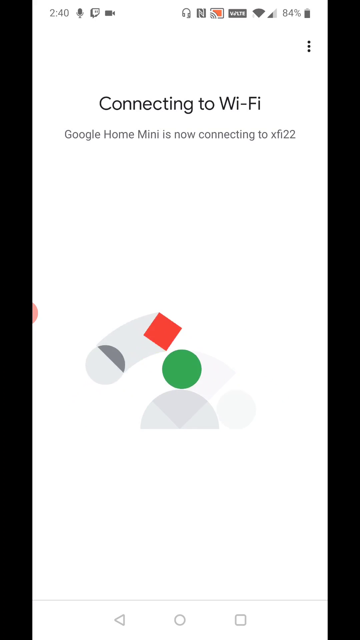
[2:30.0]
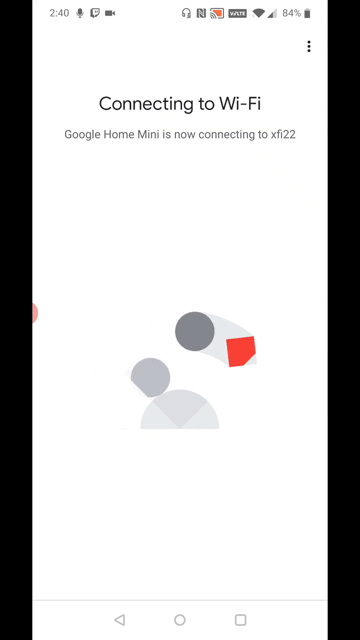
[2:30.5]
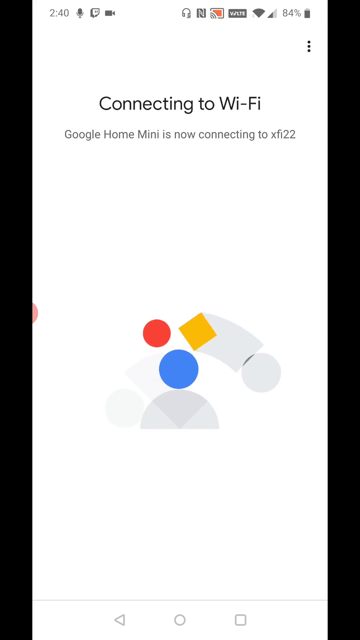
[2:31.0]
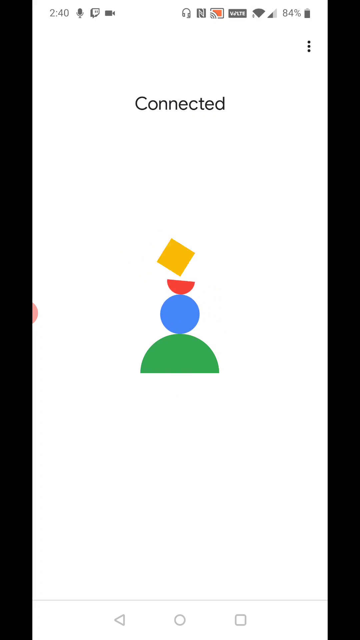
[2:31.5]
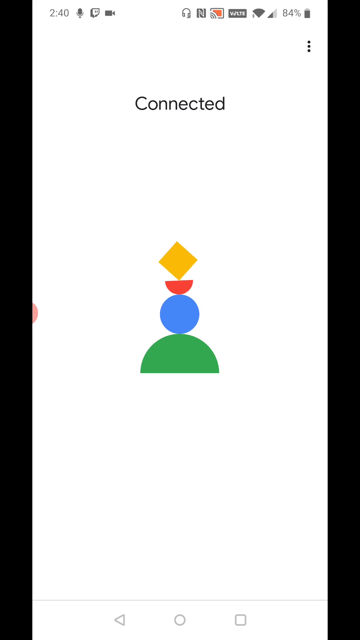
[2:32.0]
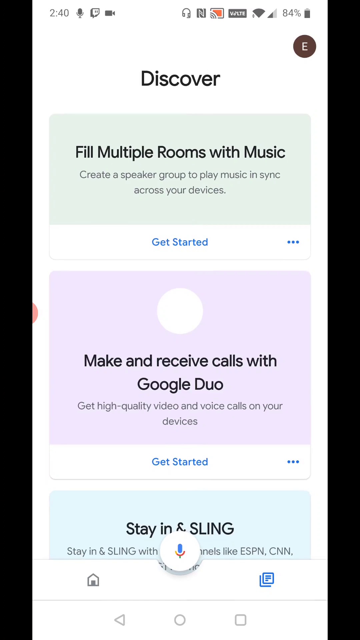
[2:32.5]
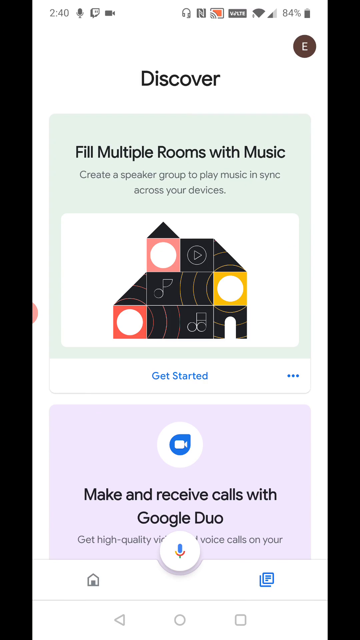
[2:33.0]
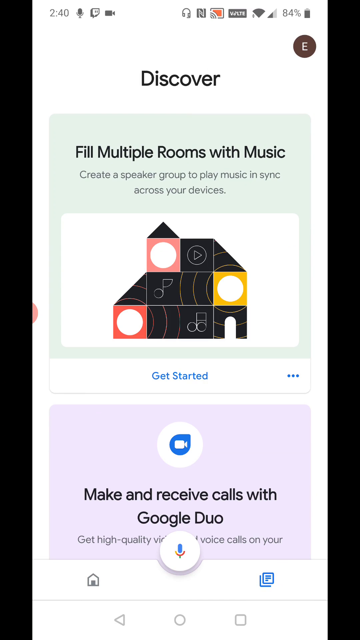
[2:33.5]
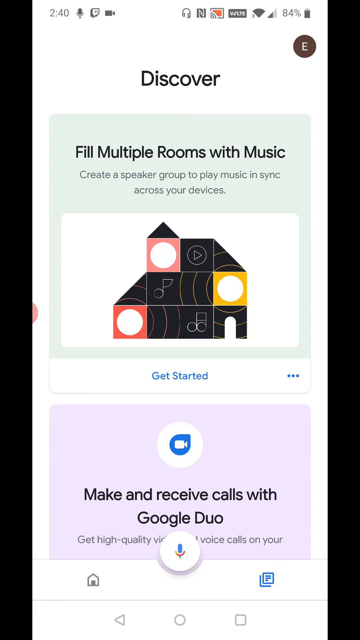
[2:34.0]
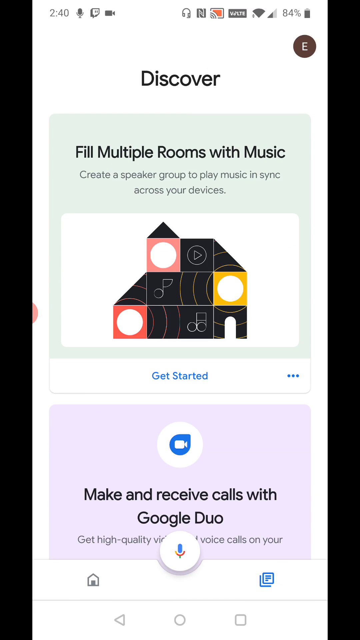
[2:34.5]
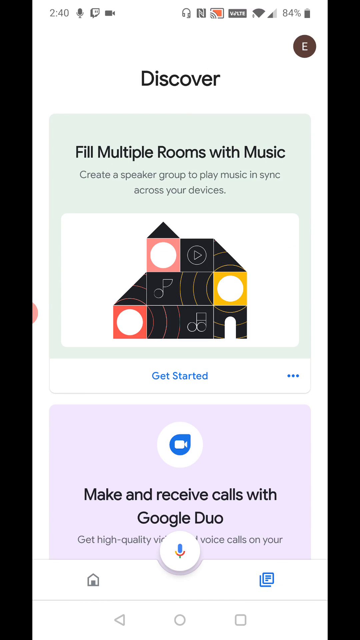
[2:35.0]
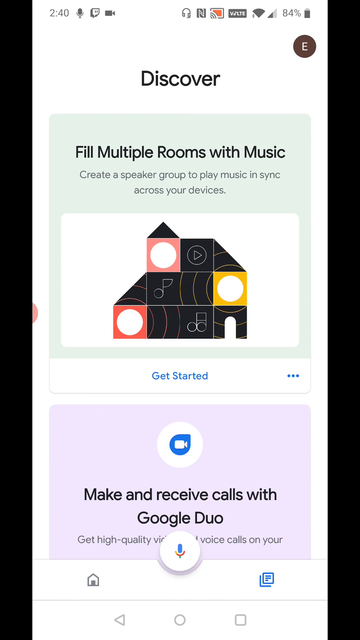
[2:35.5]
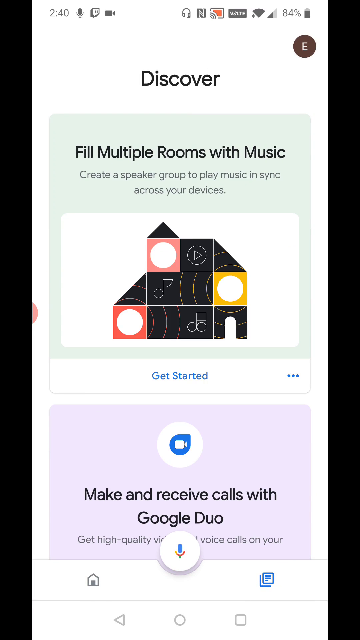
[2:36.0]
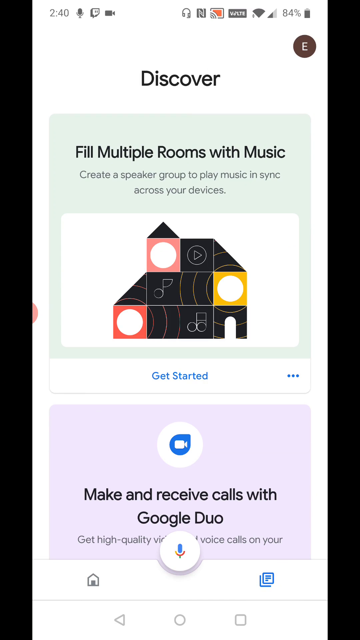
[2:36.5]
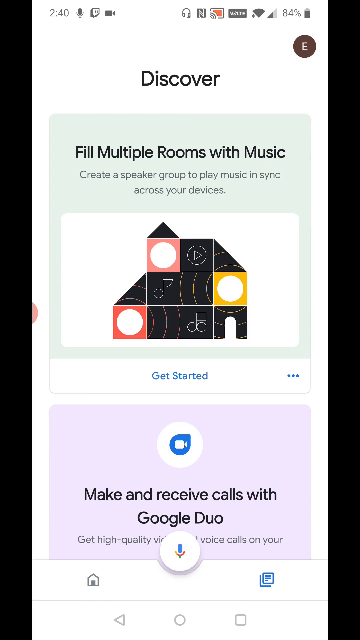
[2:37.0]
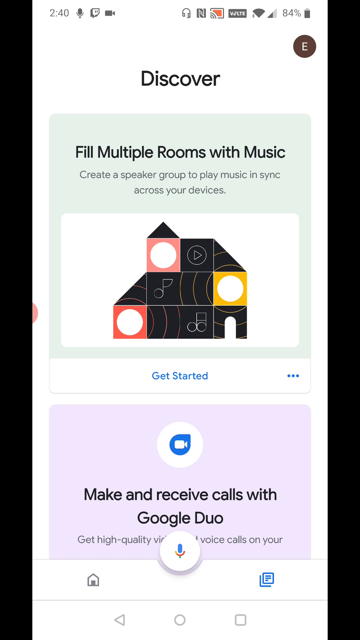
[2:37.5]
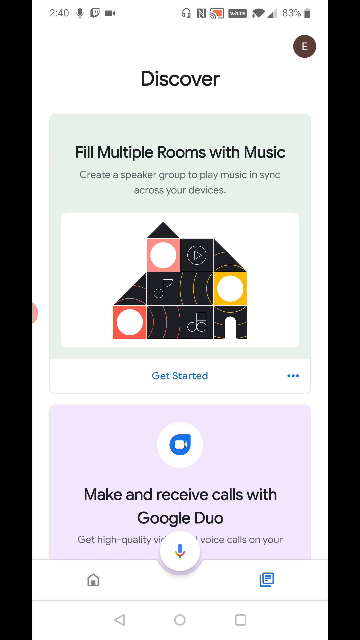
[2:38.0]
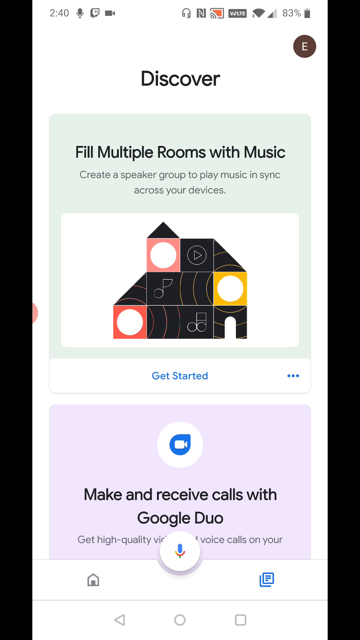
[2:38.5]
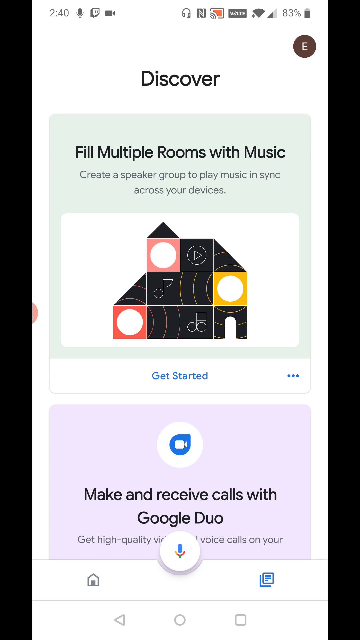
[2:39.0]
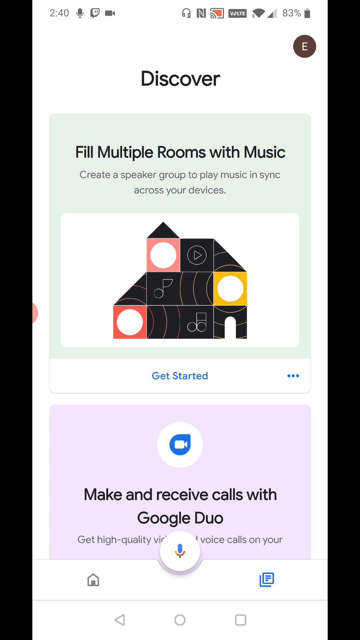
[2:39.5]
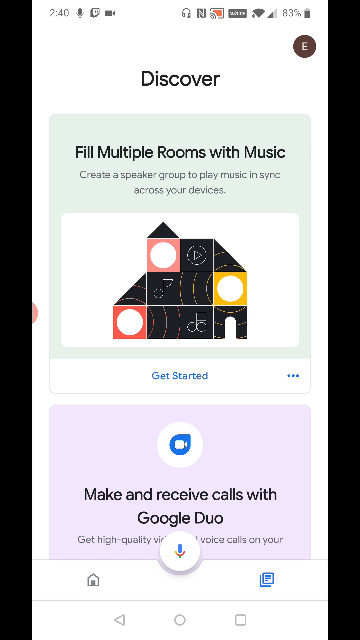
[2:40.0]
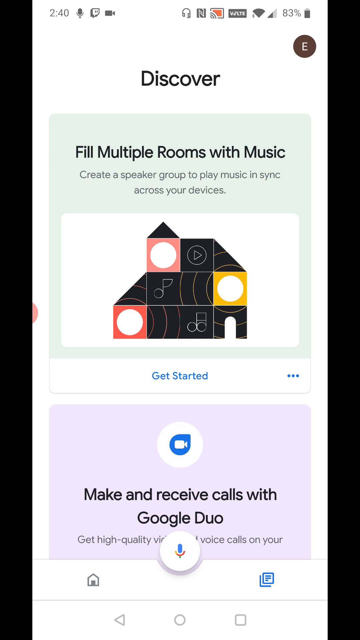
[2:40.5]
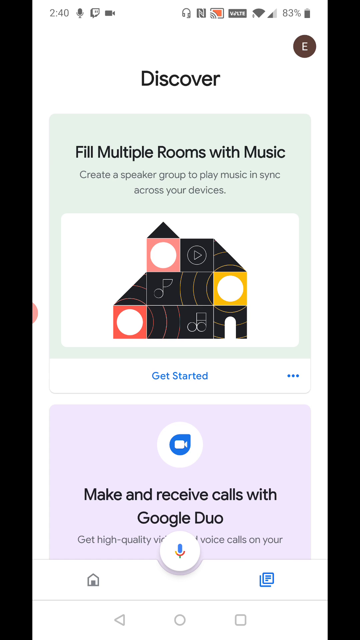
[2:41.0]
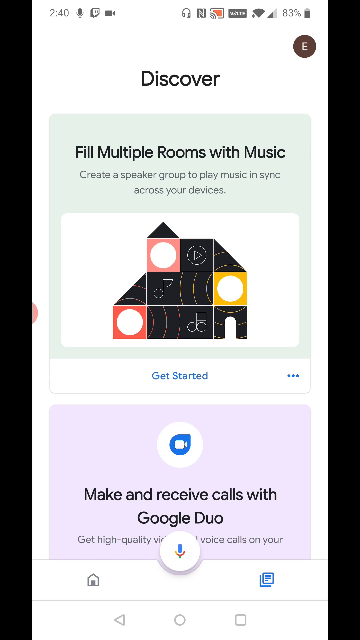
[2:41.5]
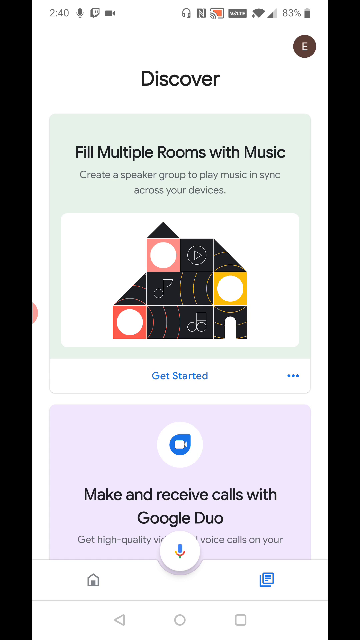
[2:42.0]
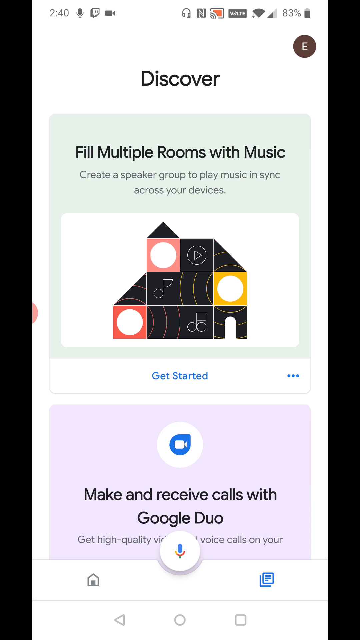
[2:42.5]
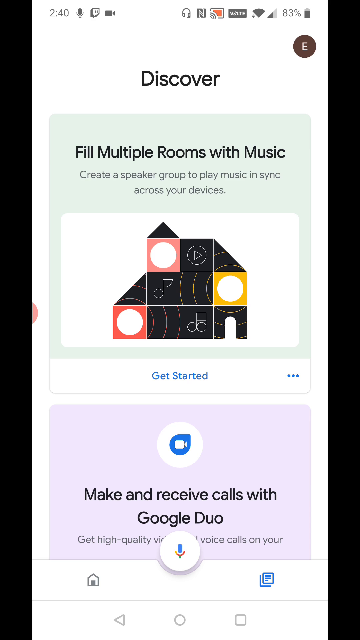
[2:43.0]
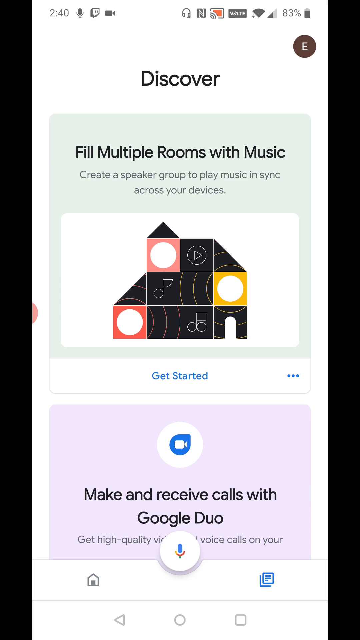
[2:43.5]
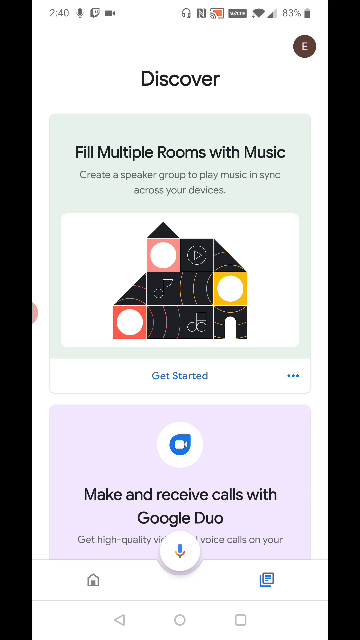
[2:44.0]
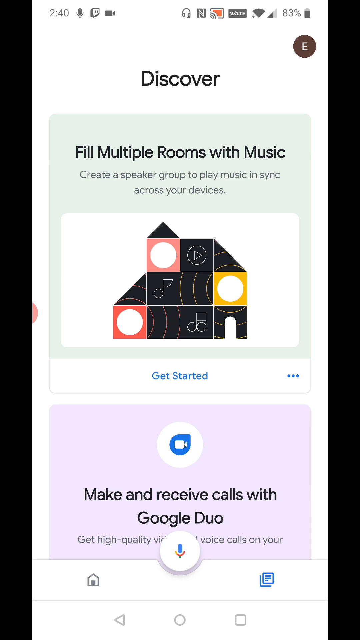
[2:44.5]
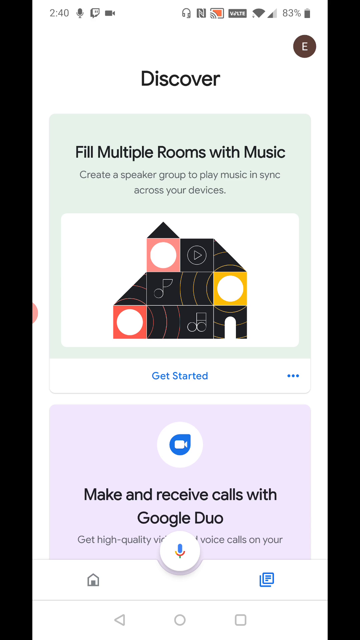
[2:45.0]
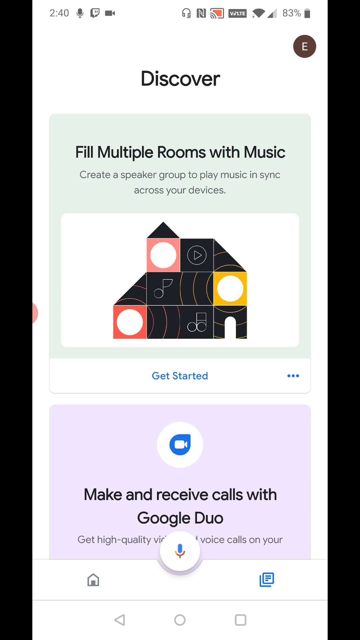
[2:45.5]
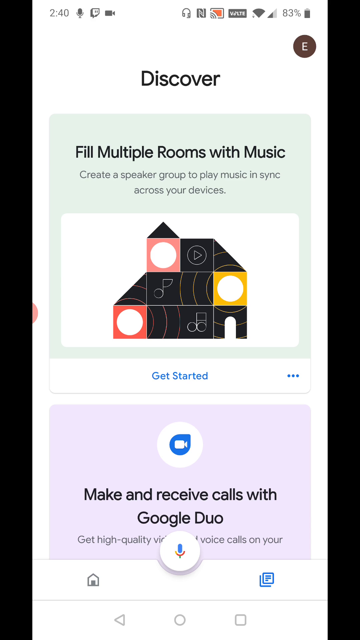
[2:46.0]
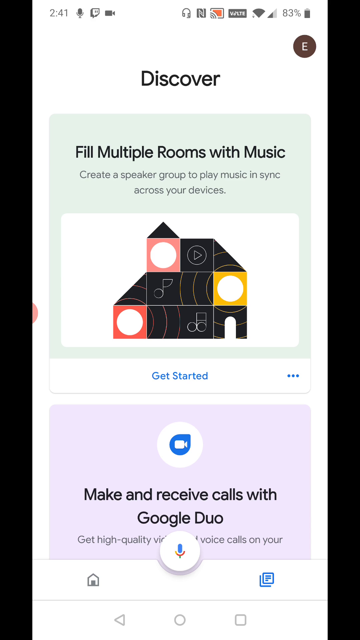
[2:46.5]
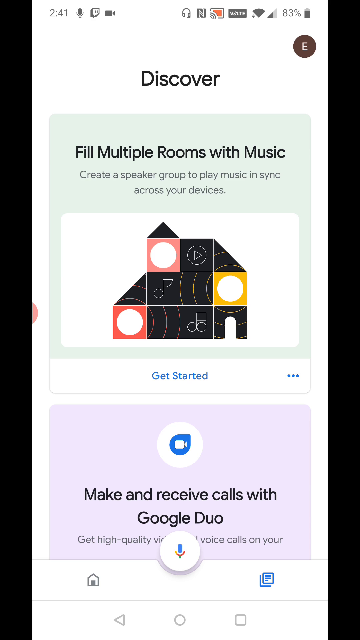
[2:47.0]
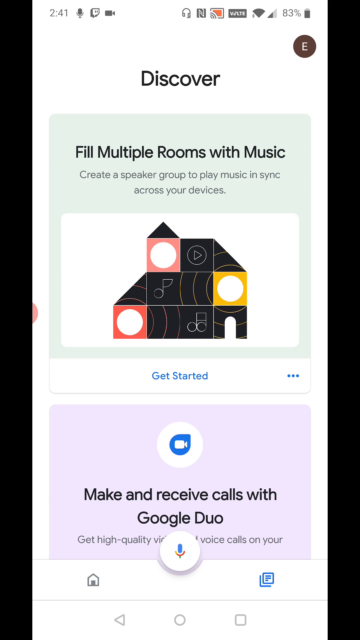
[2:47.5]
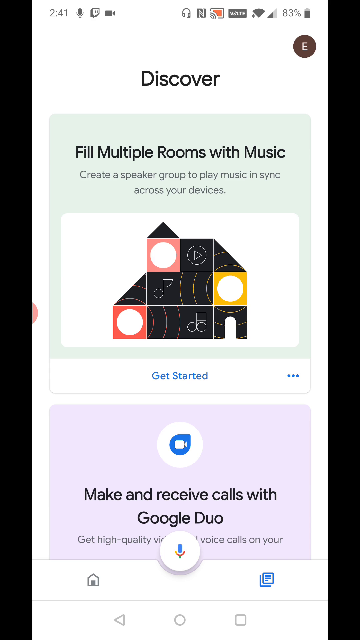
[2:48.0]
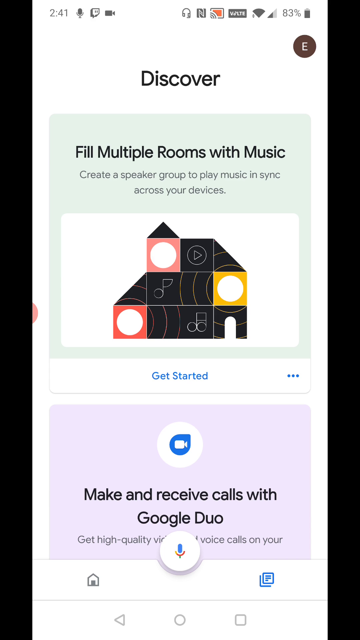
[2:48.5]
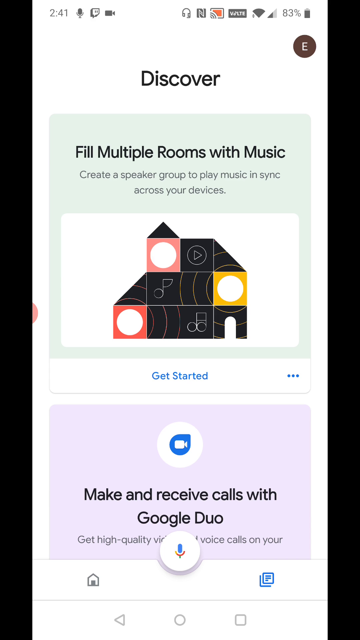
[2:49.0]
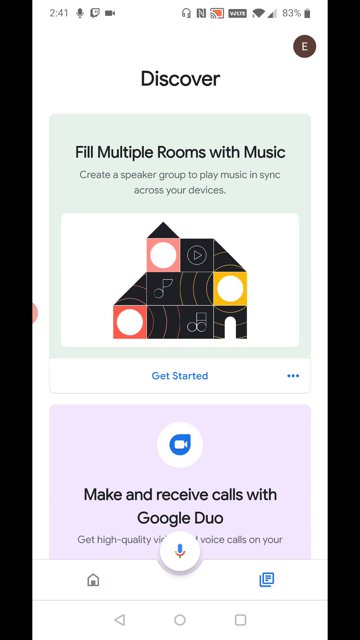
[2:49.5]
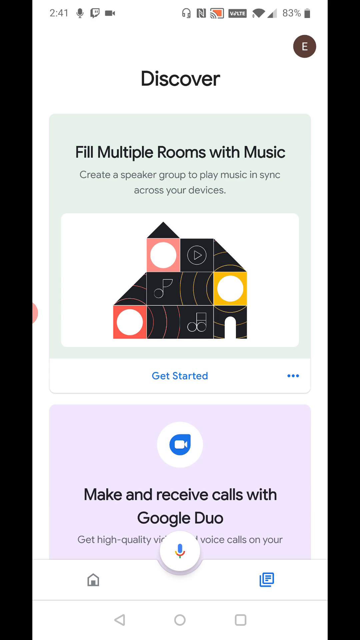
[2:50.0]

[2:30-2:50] The screen says "Connecting to Wi-Fi" and "Google Home Mini is now connecting to XFI 22." The phone shows 2:40 and 84 percent battery. A loading screen appears as it tries to connect, then it says "Connected", with green, blue, red and yellow shapes, all connected, at the bottom of the screen. Next a screen says "Discover" and "Create a speaker group to play music in sync across your devices," with a "Get started" option. The person has not clicked anything yet, and the phone now shows 2:41. The screen also says "Make and receive calls with Google Duo."